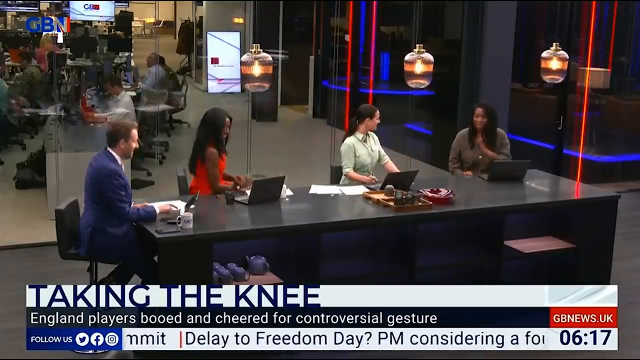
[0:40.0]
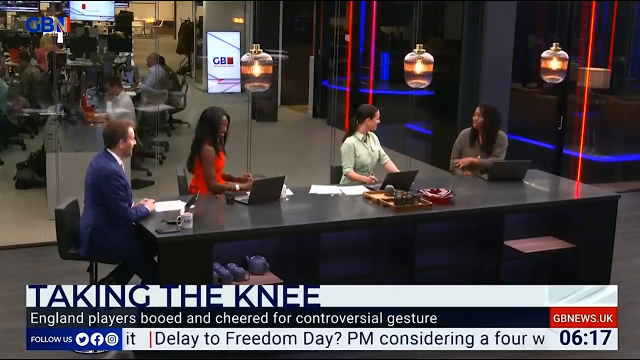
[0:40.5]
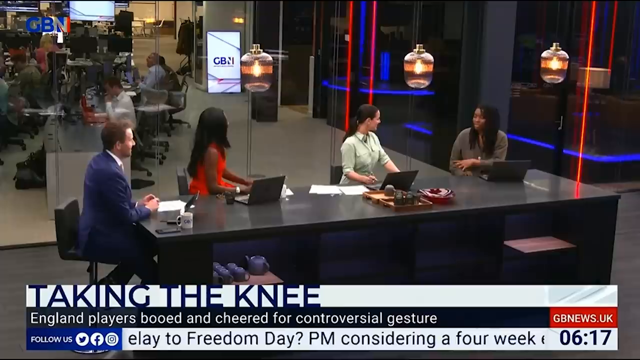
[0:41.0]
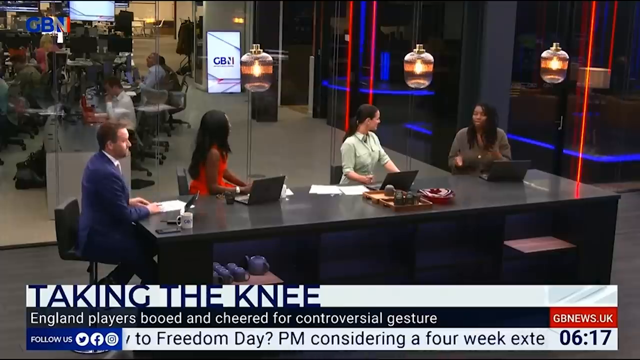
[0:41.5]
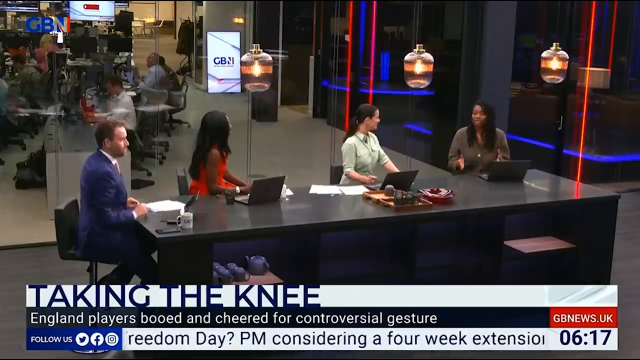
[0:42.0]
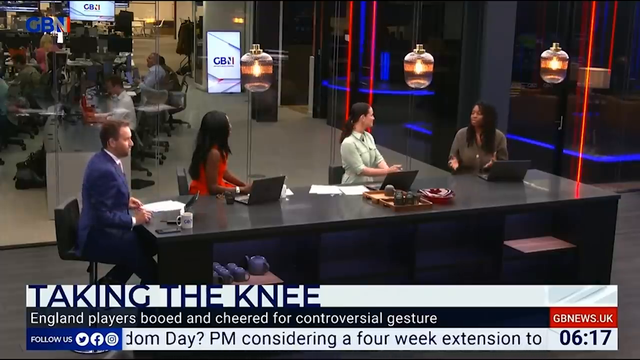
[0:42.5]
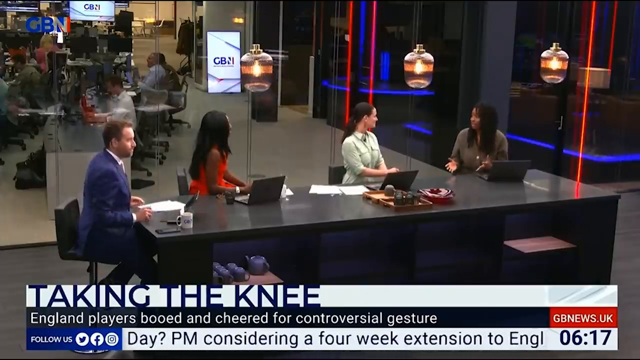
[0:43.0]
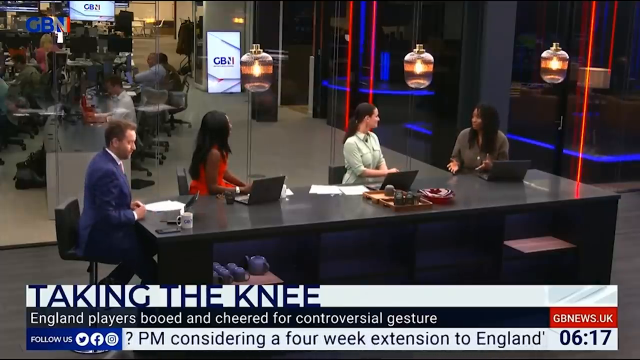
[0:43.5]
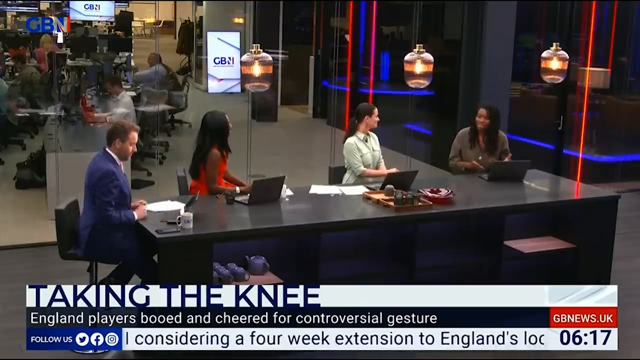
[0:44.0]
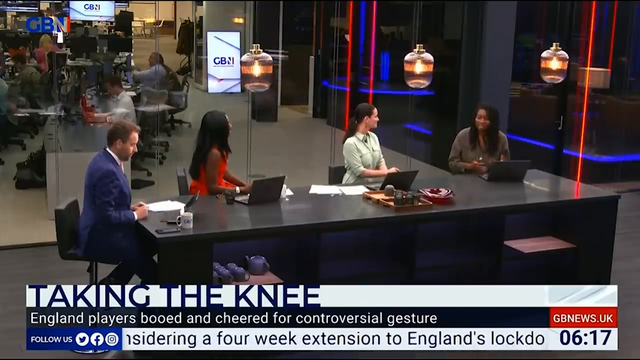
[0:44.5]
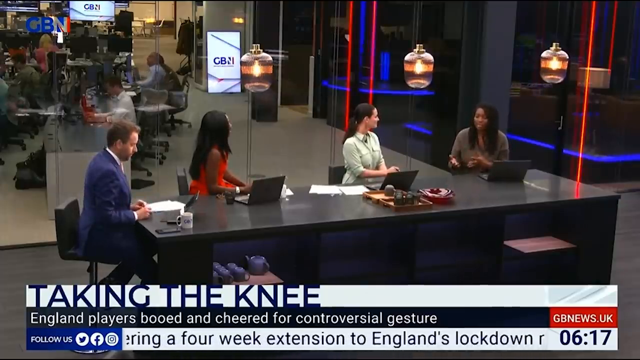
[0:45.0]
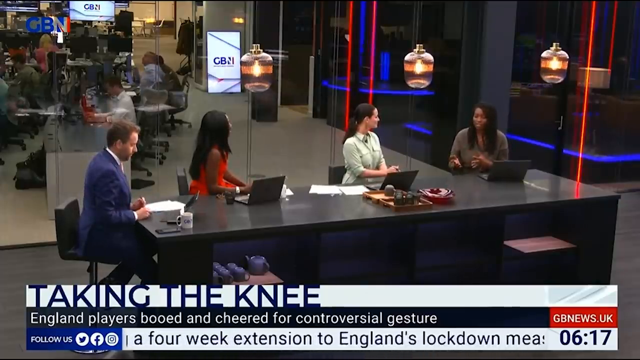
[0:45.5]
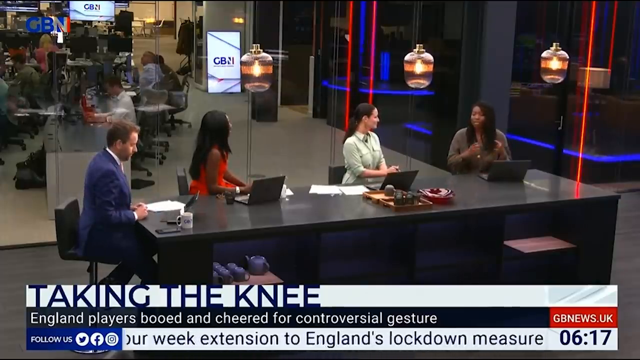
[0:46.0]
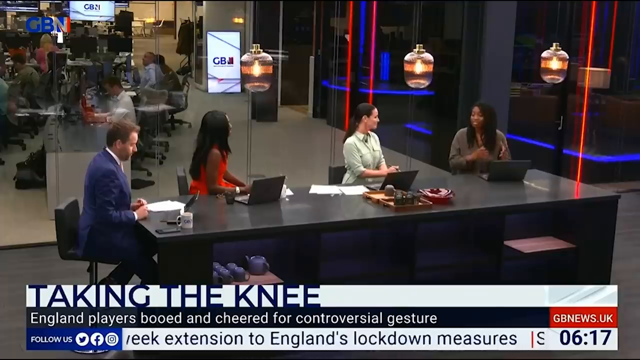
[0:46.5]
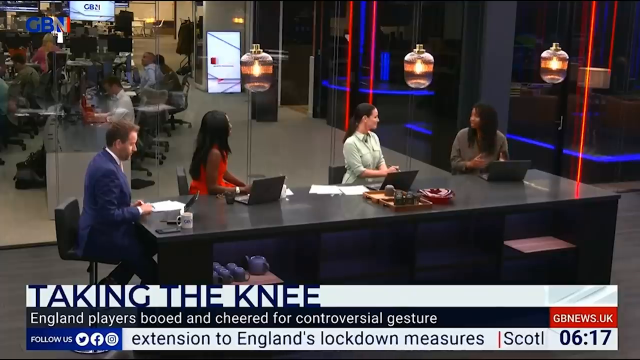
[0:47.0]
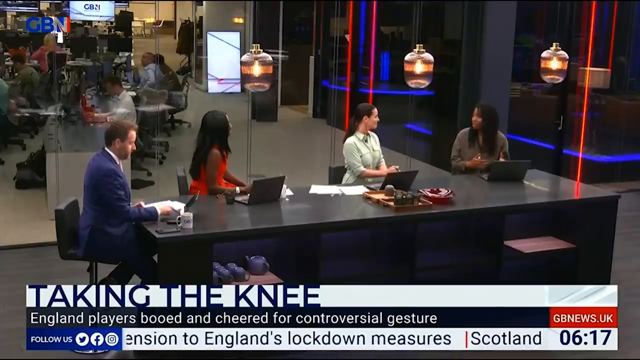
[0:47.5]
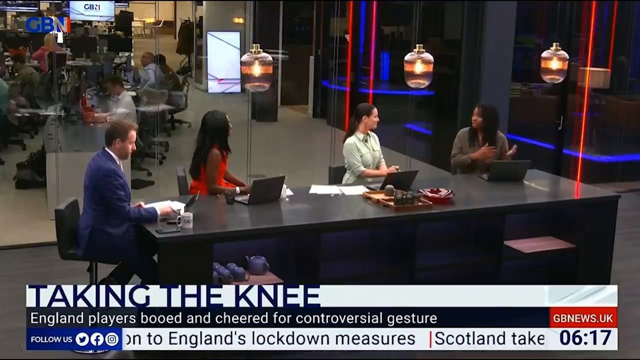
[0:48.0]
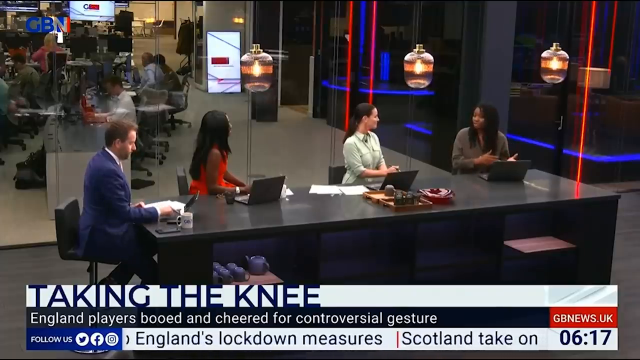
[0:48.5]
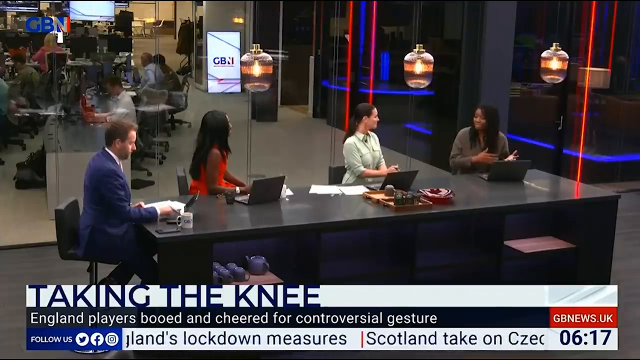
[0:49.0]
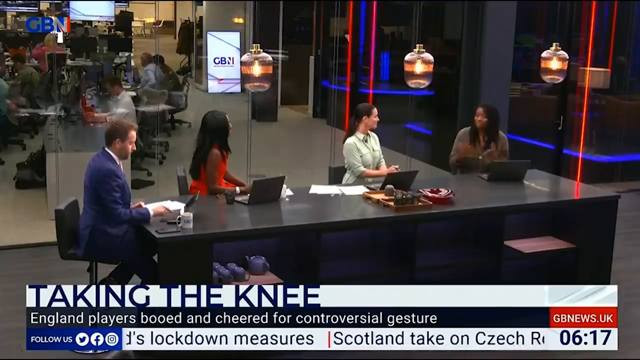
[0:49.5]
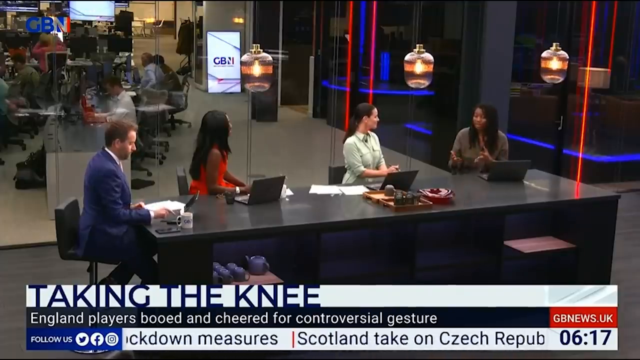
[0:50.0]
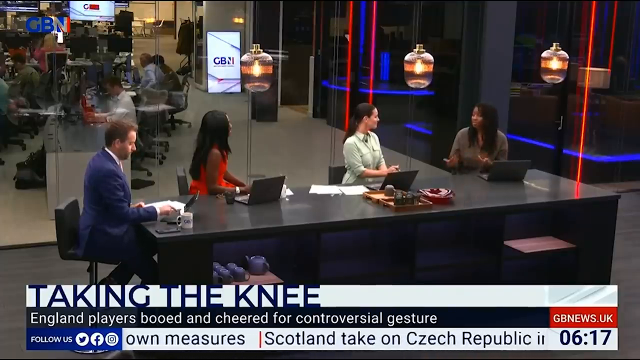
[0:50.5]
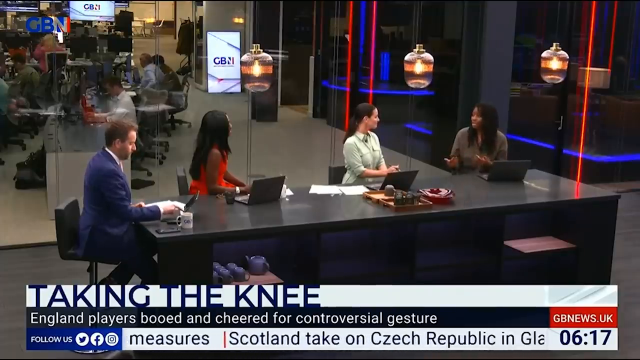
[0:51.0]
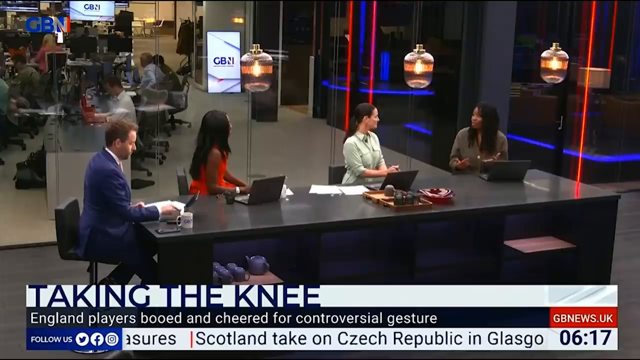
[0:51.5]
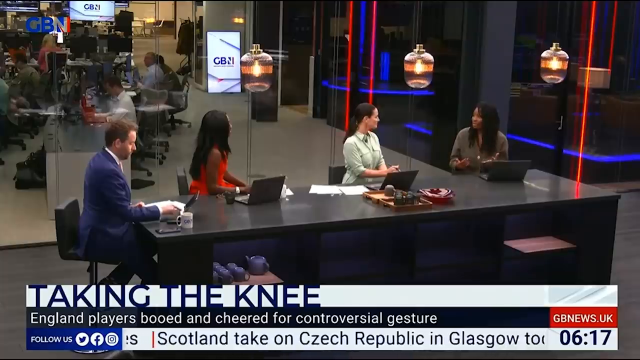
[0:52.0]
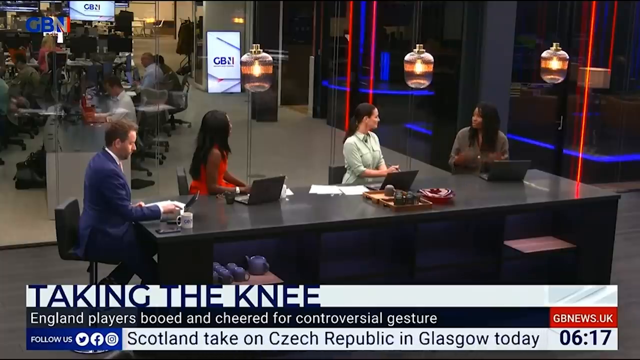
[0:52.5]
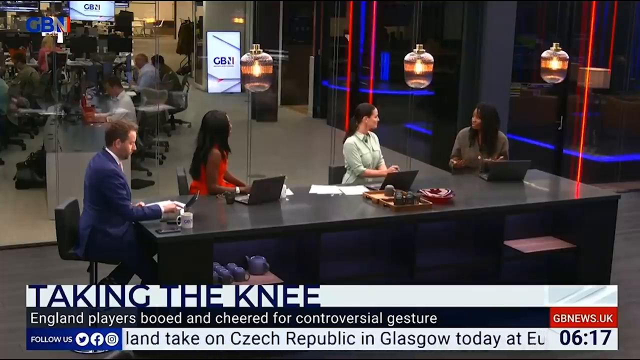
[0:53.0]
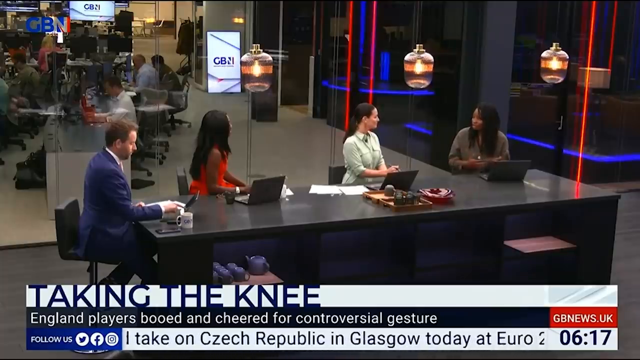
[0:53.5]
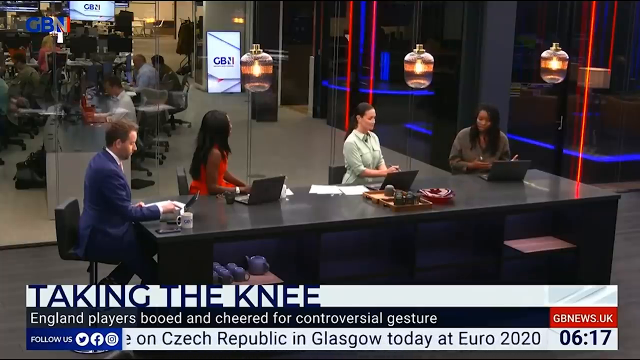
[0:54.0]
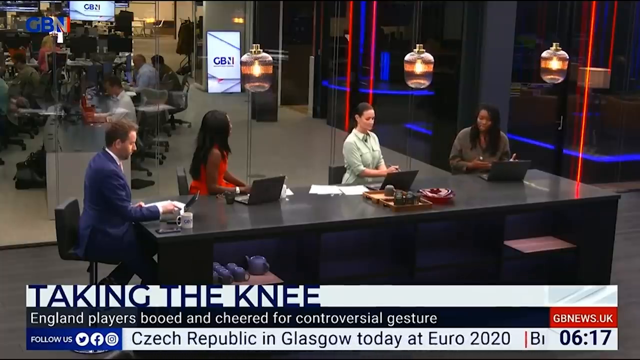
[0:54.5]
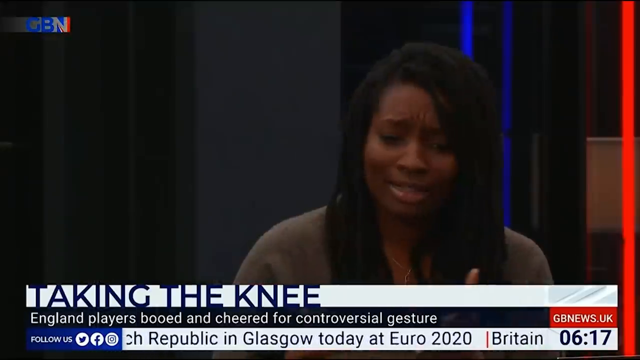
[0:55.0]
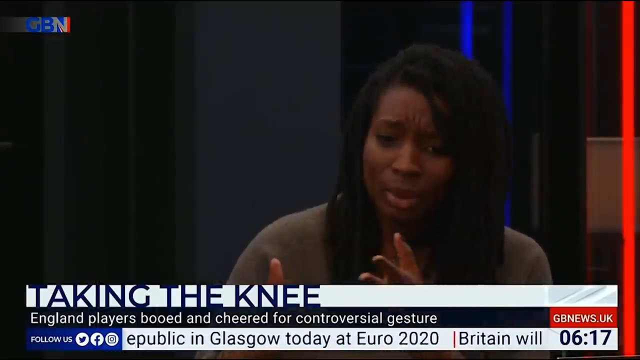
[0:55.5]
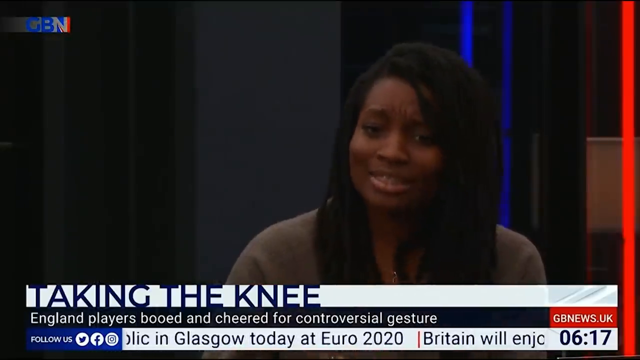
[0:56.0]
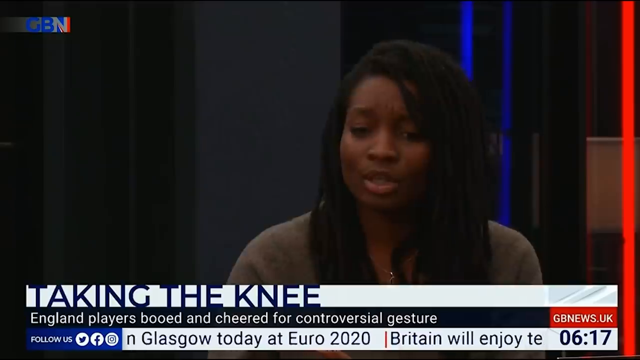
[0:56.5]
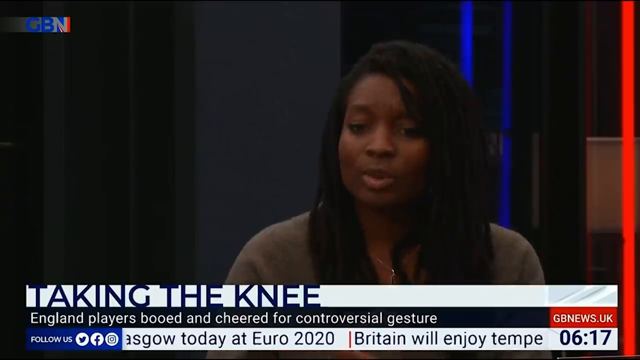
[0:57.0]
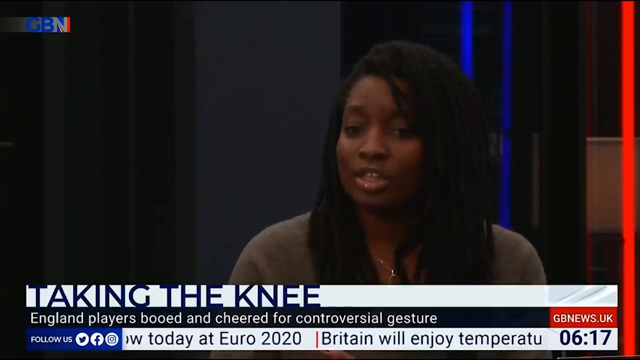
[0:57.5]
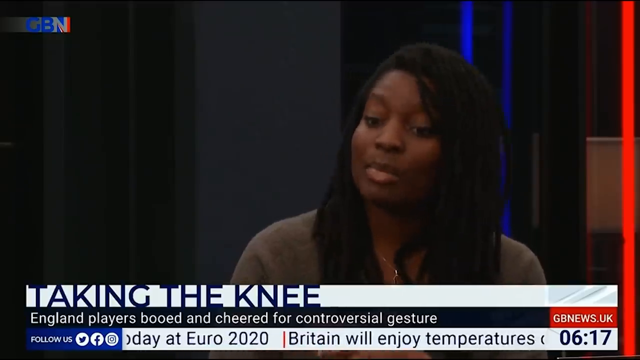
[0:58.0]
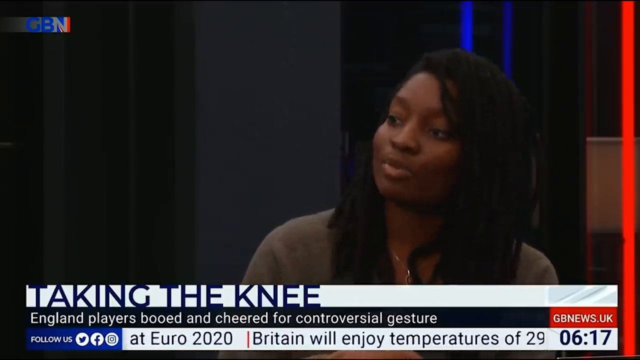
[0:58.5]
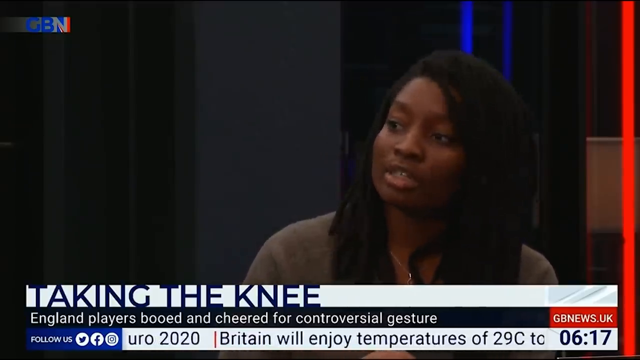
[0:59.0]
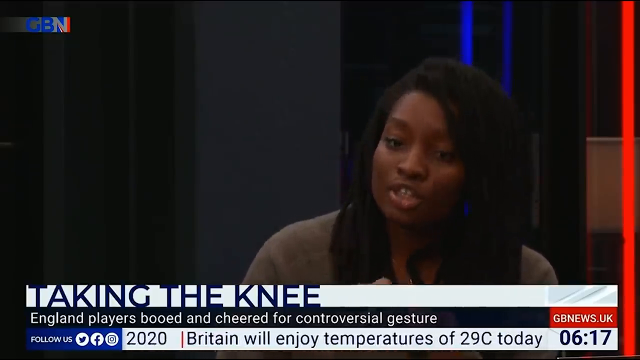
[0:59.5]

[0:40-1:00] The scene is a newsroom. In the top left of the screen a bunch of people sit at desks. In the foreground is a long black table. At its left end is a man in a blue suit; going right are a woman in a red dress, a woman in a teal shirt, and a woman in a brown shirt. At the bottom of the screen the text reads "taking the knee," with "England players booed and cheered for controversial gesture" below it and "gbnews.uk" to the right. The people at the desk are talking. The woman on the right in the brown shirt holds her left hand out, palm down, then holds both hands out, palms facing forward, as she talks. The woman in the teal dress shakes her head. The woman in the brown shirt keeps talking, gesturing with her hands out in the air and palms facing each other, then holds her palms toward the top of the screen and makes more gestures. The camera zooms in on her; she still holds her hands out in front of her with palms facing each other as she talks. The same text remains at the bottom of the screen, and in the top left corner it says "gbn."